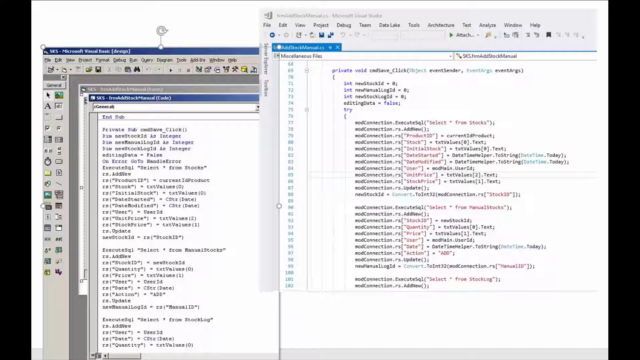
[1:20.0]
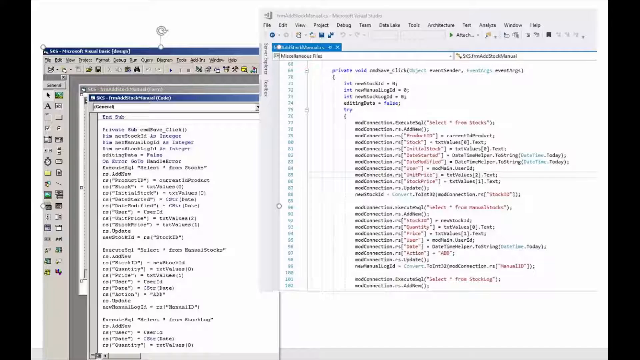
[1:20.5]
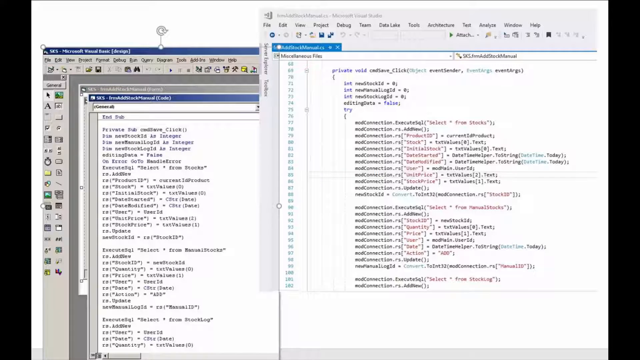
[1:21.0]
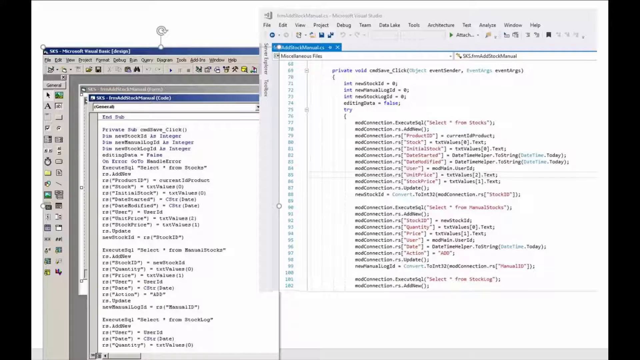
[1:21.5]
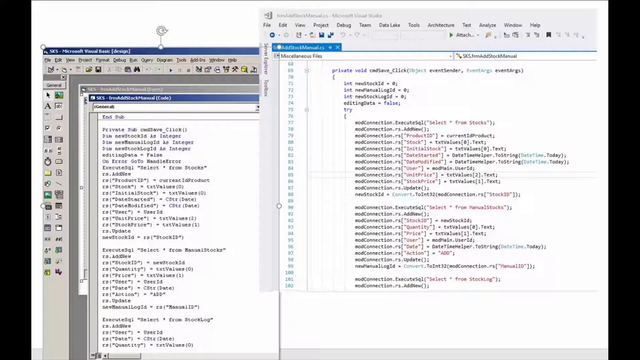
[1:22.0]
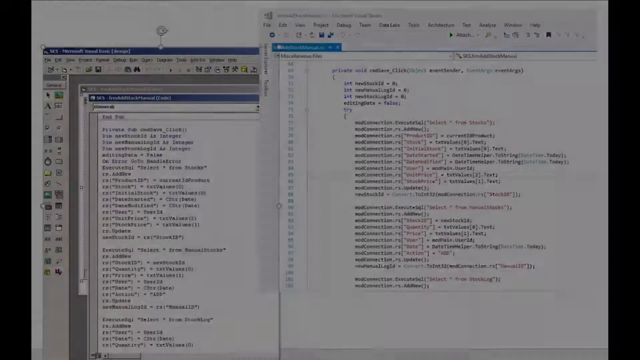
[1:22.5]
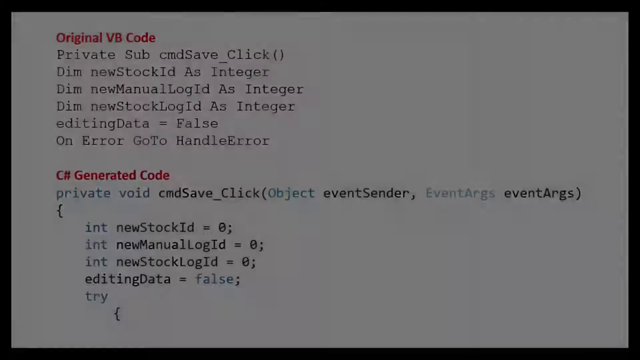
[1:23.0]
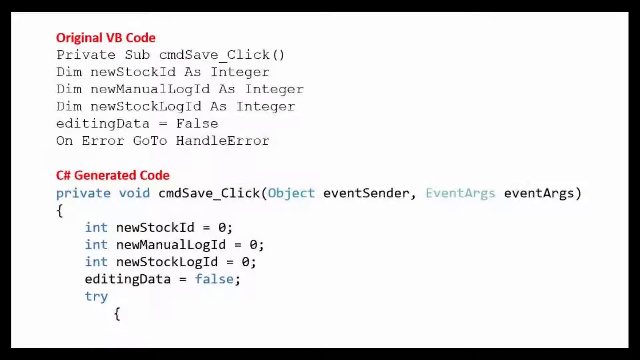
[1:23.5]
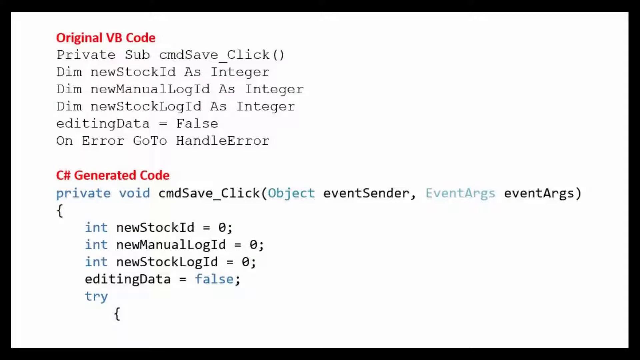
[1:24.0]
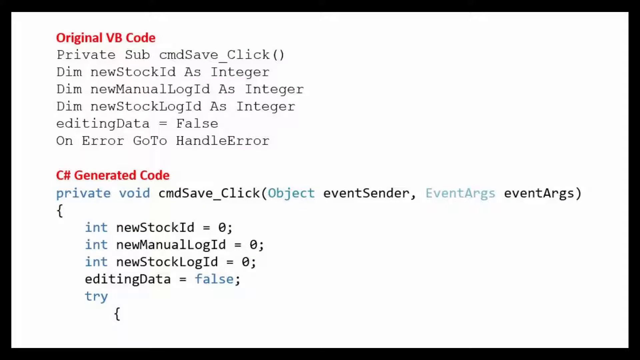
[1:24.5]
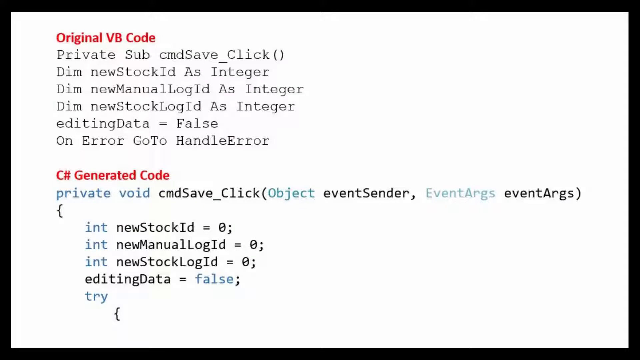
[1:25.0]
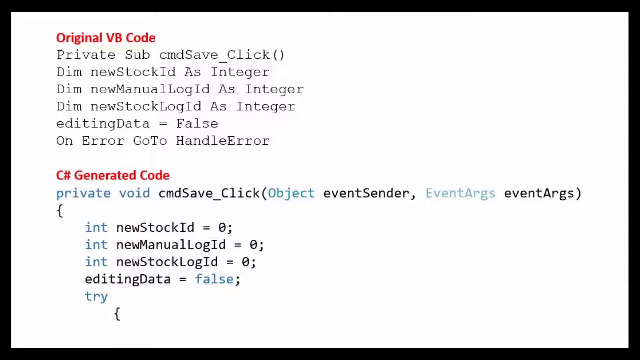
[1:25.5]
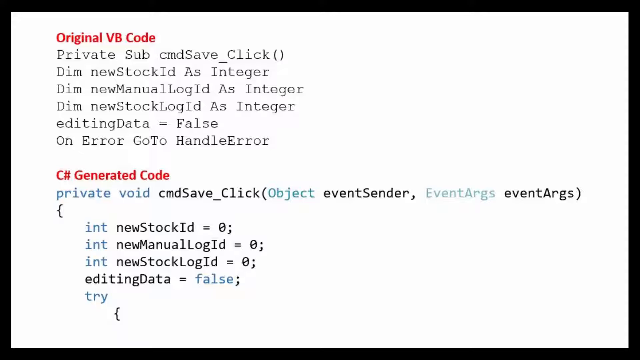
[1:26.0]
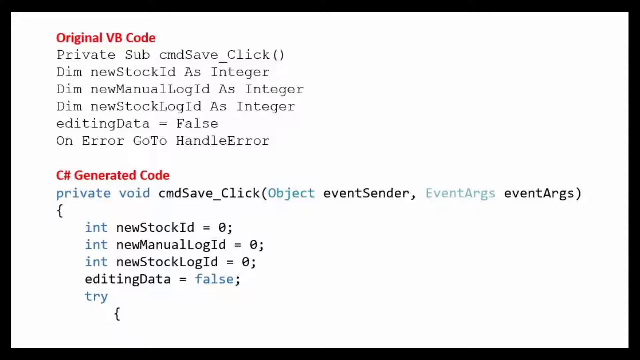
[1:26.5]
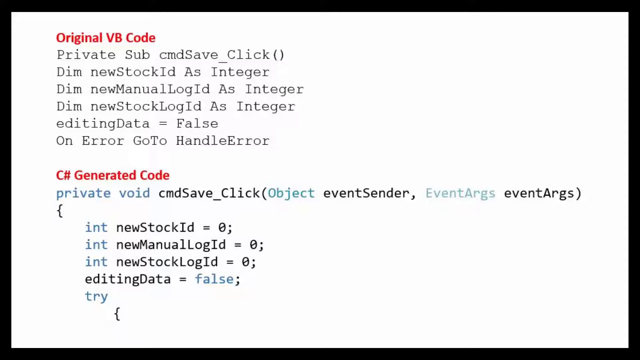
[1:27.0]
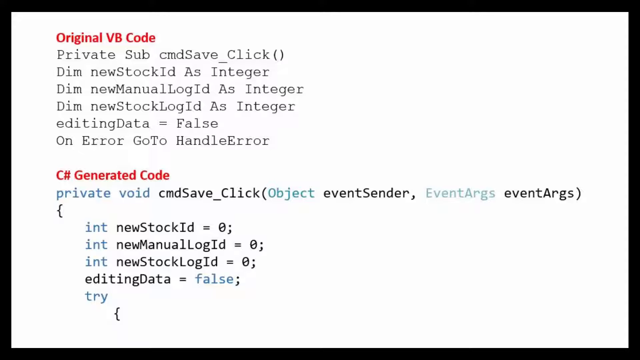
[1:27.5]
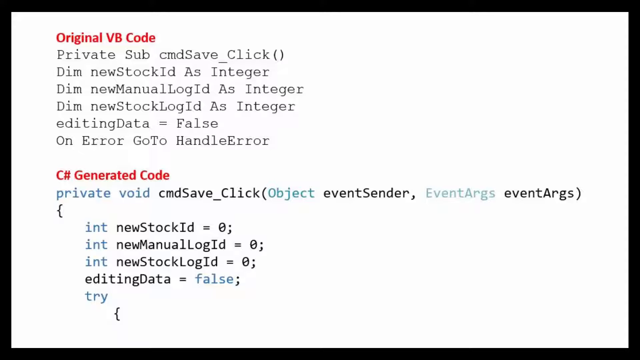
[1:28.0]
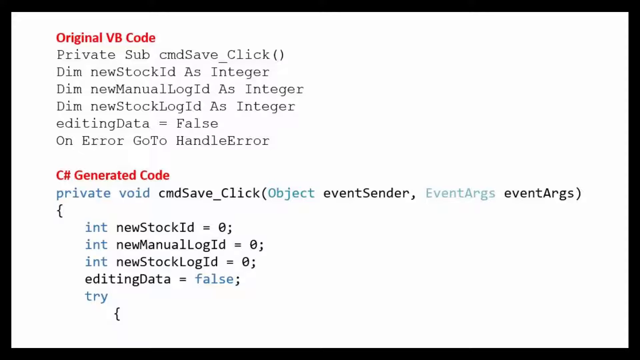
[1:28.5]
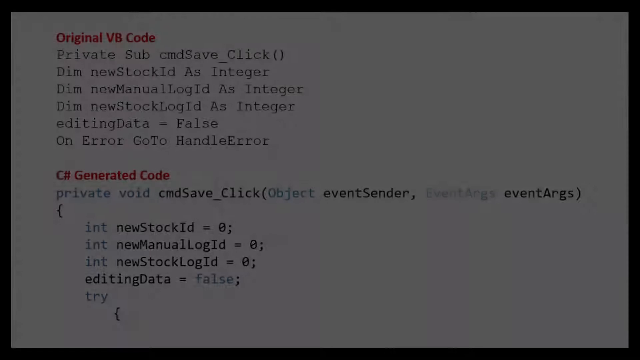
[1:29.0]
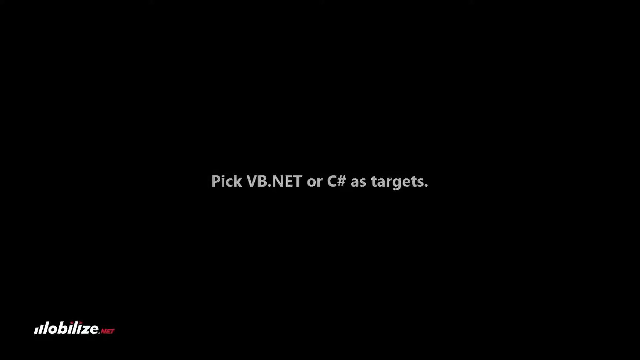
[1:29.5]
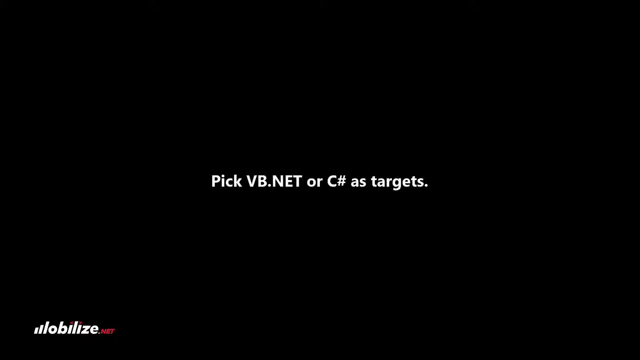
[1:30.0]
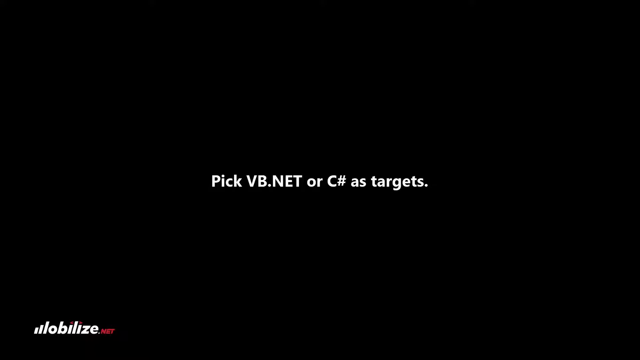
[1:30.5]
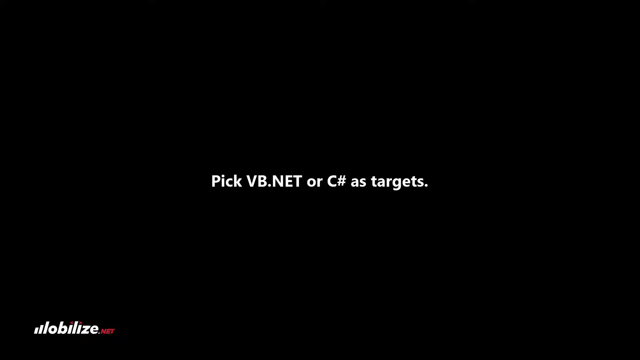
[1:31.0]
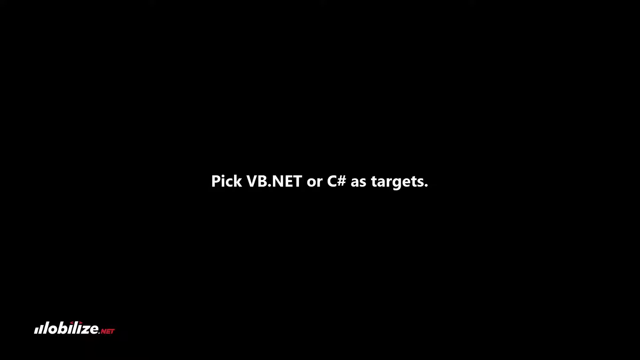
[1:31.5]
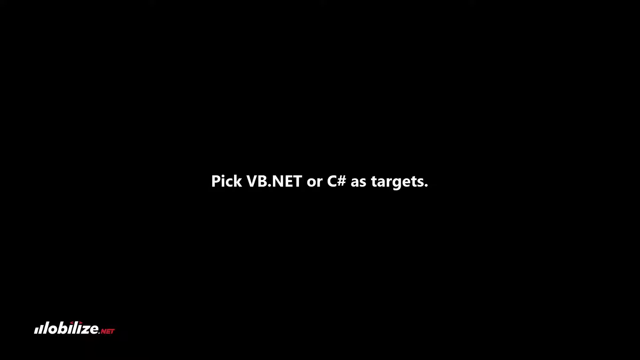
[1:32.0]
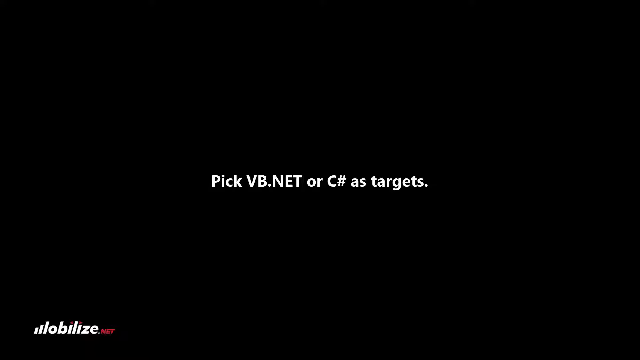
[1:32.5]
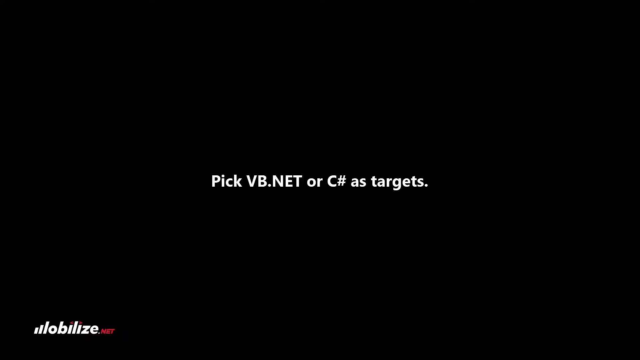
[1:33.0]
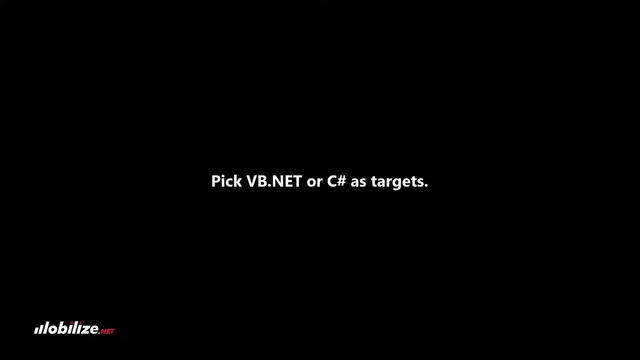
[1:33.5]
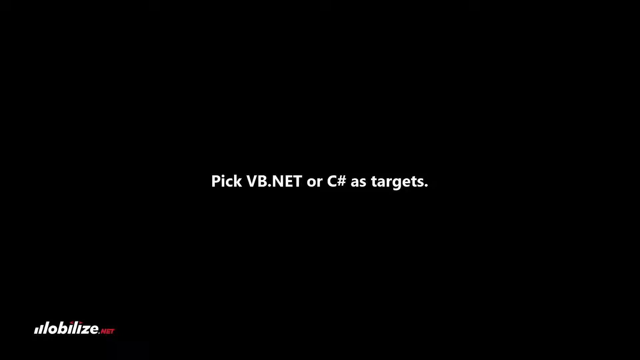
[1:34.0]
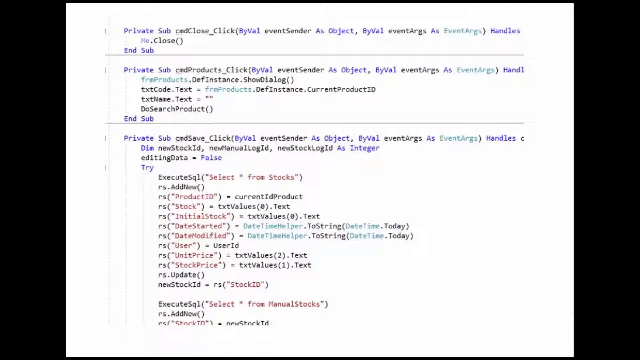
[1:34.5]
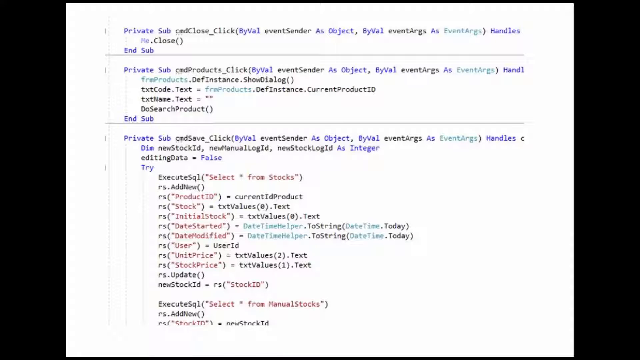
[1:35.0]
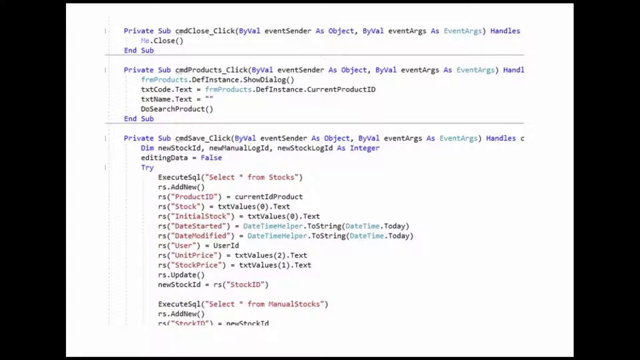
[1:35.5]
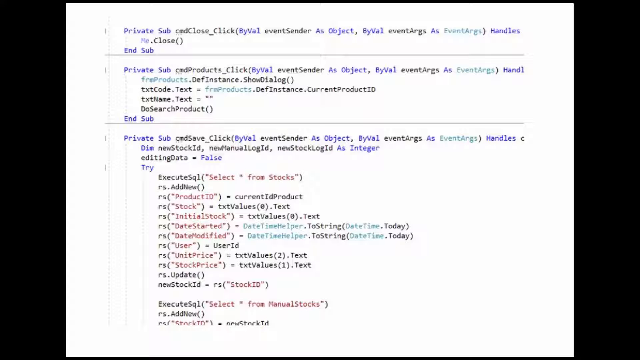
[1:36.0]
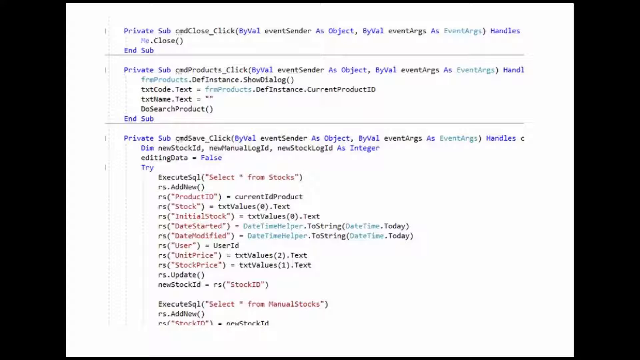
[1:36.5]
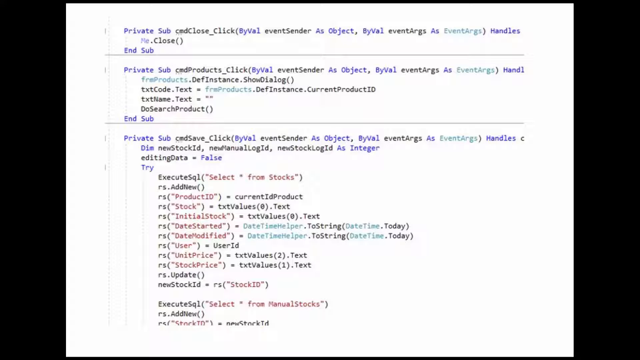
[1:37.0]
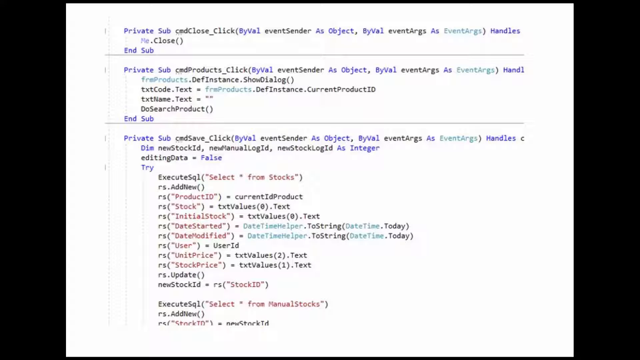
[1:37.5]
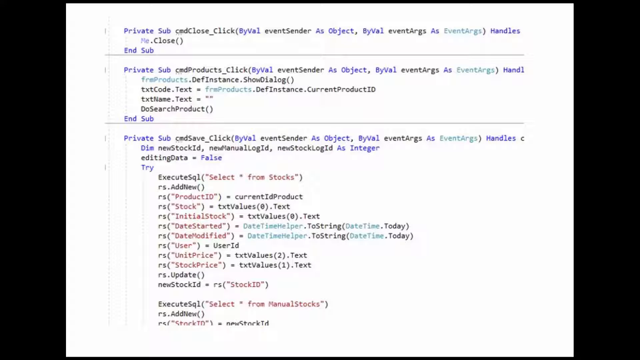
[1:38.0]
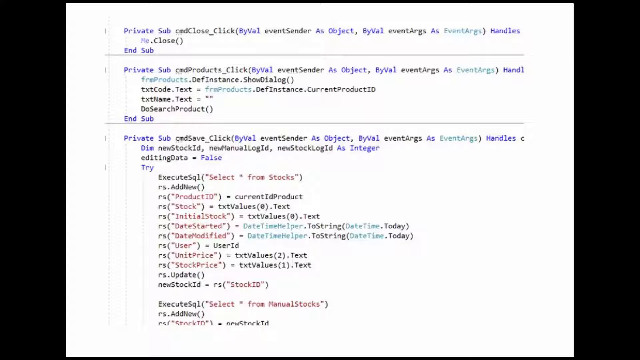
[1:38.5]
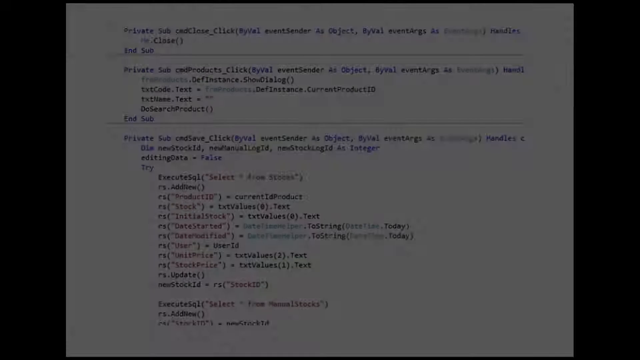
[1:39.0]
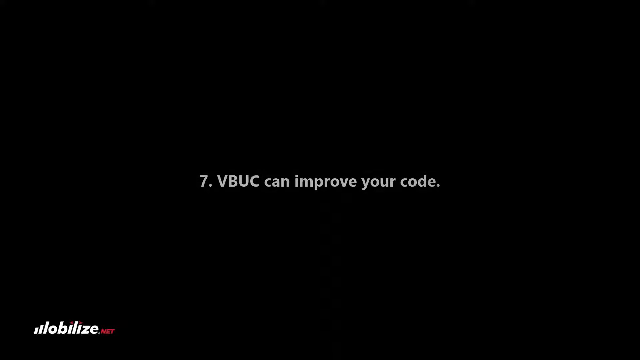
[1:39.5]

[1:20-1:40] The coding window fades out and disappears, and another image fades in that looks like another set of code. Its title reads "Original VB Code," followed by a few lines of code reading "Private Sub cmd Save_click() Dim newStockid As Integer Dim newManualLogId As Integer" and continuing with more lines ending "On Error Goto Handle Error." Underneath, in red, is a second title, "C# generated code," with code that seemingly does the same thing in a different language. The image fades out to the black screen, where white Arial text in the center reads "Pick VB.net or C# as targets." The text then fades out to the black screen.